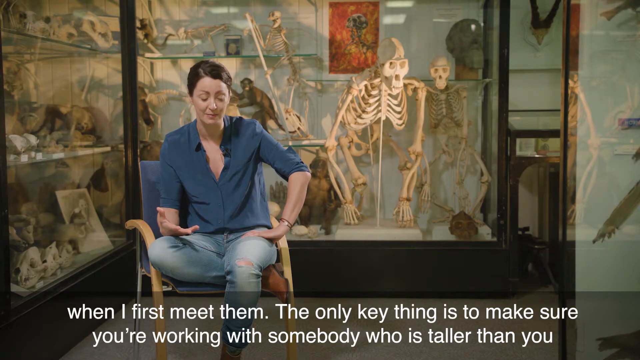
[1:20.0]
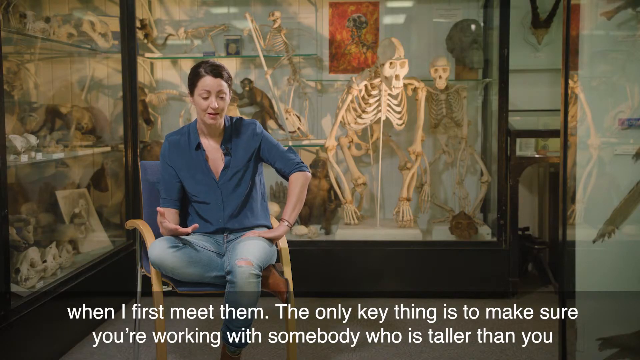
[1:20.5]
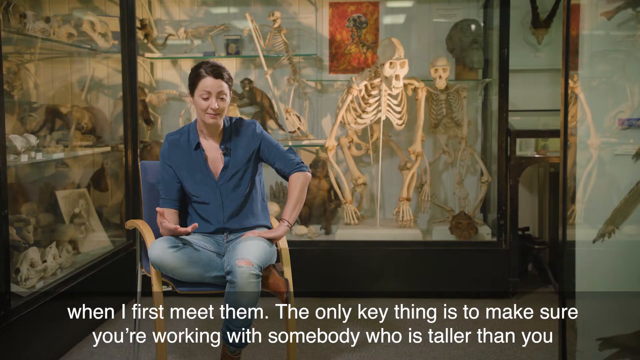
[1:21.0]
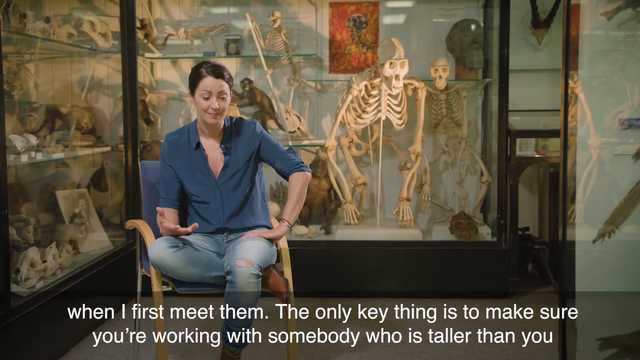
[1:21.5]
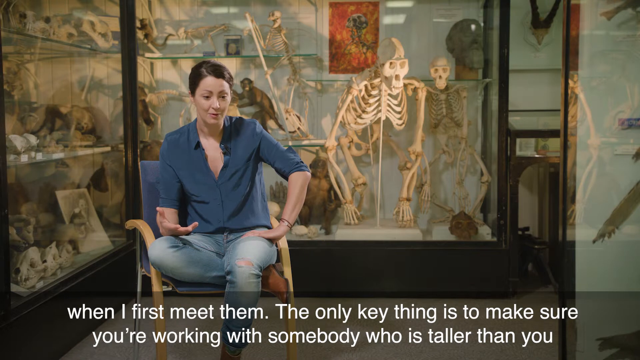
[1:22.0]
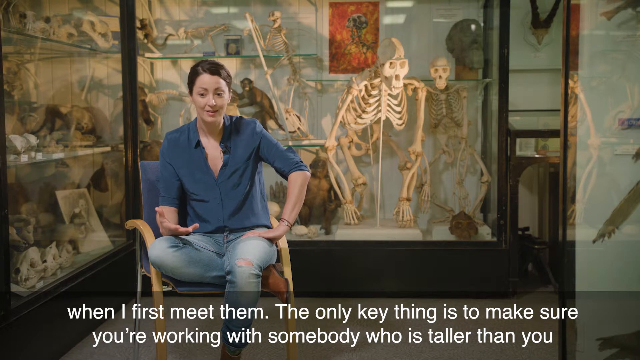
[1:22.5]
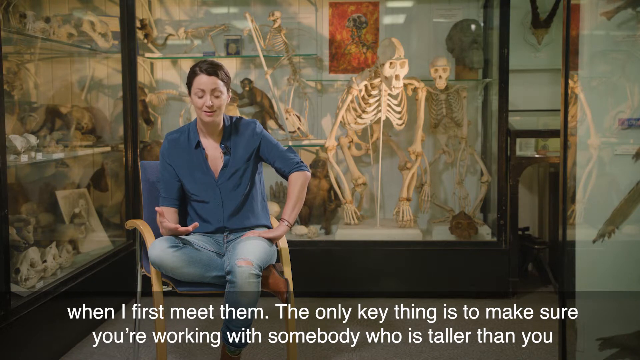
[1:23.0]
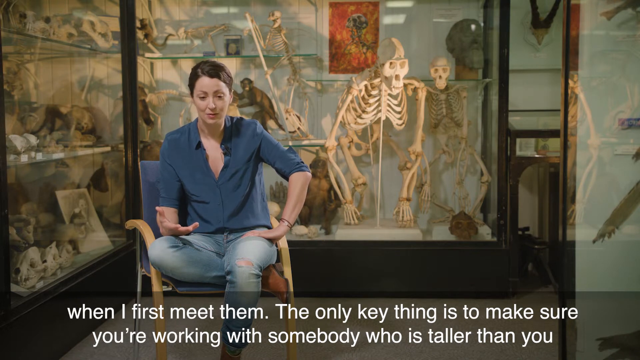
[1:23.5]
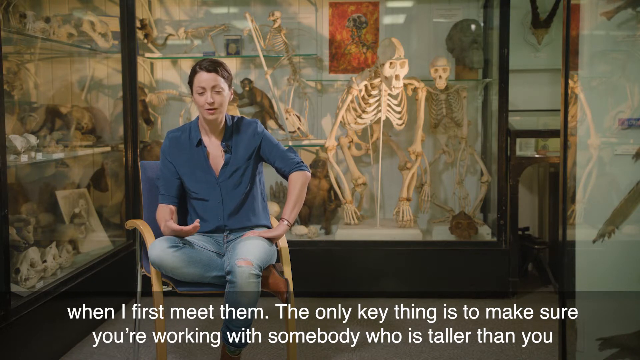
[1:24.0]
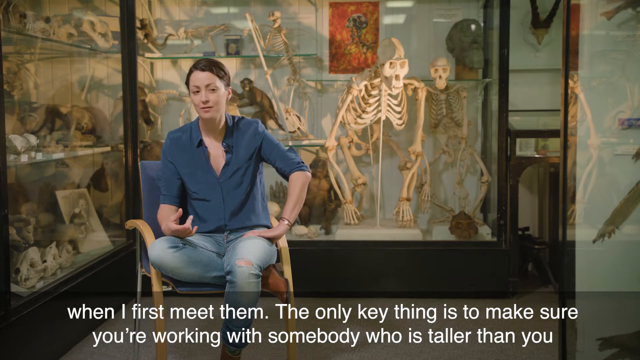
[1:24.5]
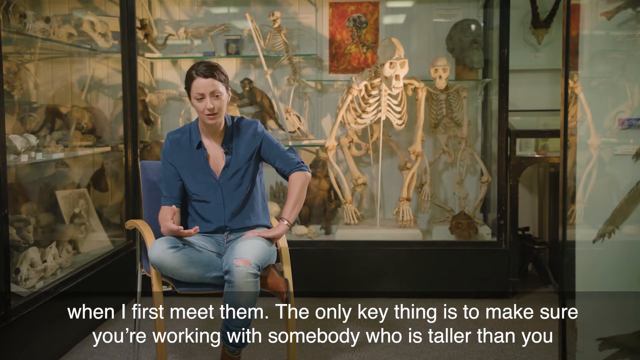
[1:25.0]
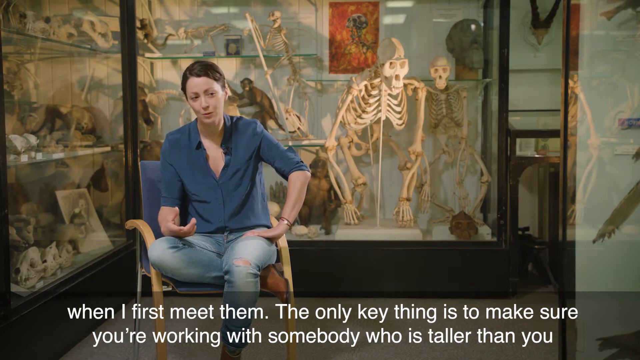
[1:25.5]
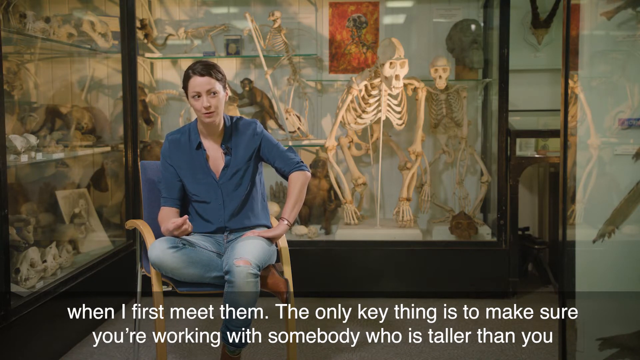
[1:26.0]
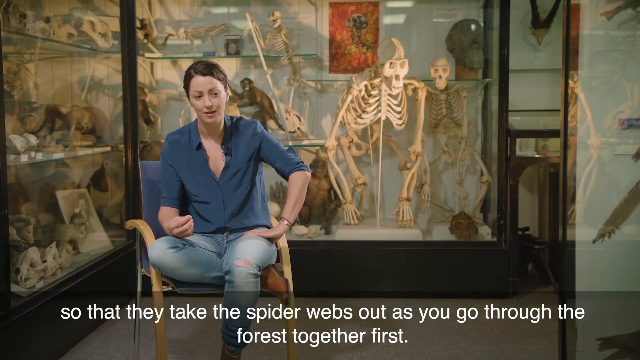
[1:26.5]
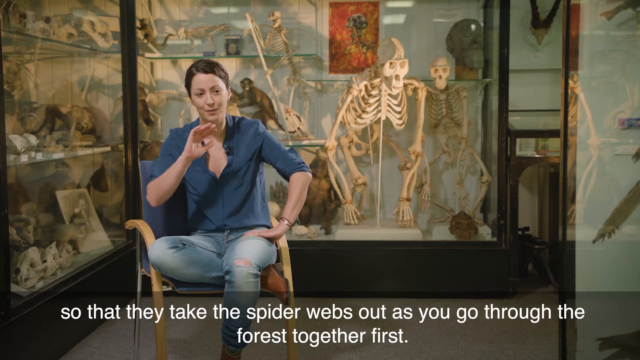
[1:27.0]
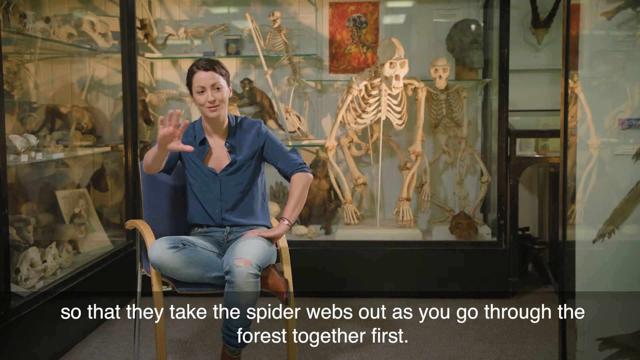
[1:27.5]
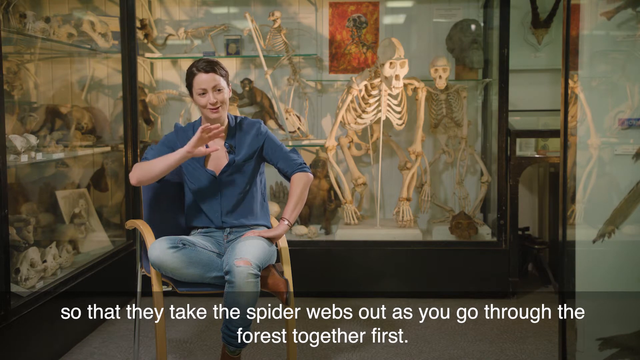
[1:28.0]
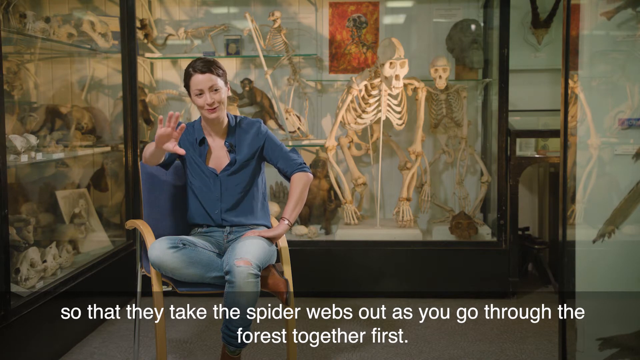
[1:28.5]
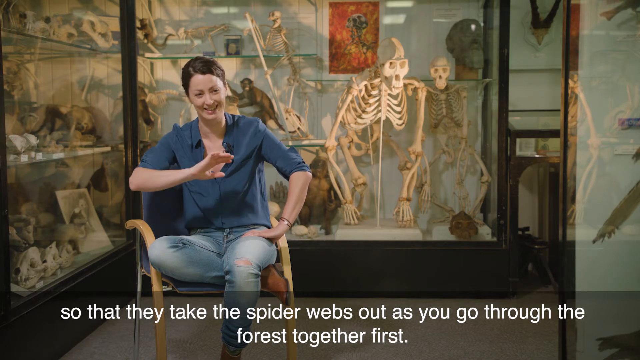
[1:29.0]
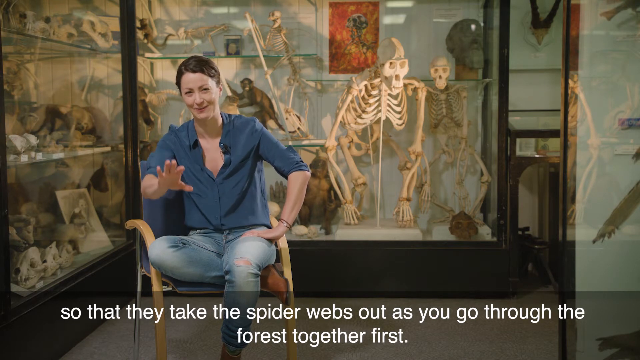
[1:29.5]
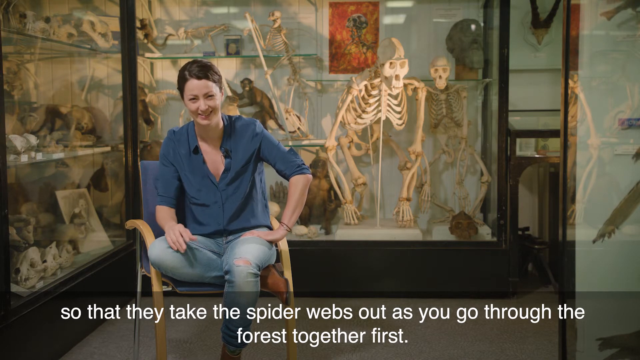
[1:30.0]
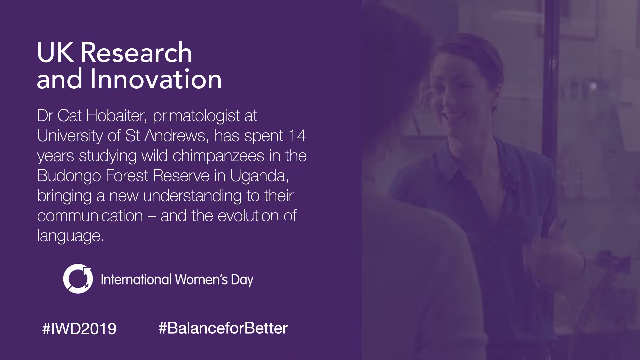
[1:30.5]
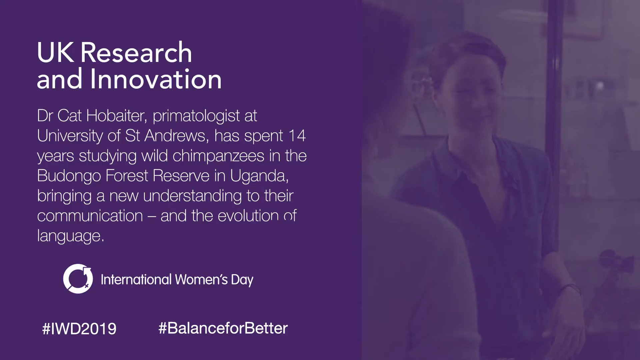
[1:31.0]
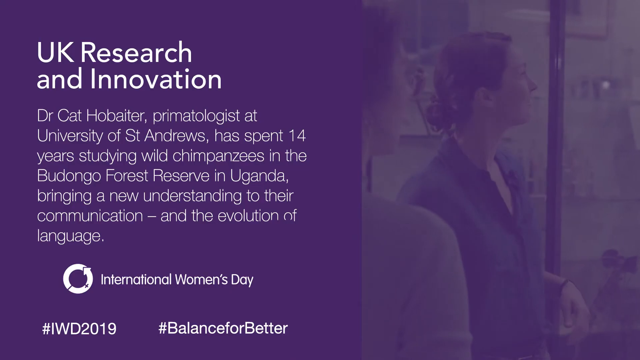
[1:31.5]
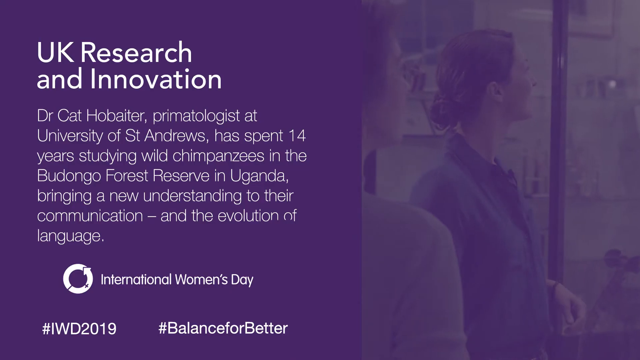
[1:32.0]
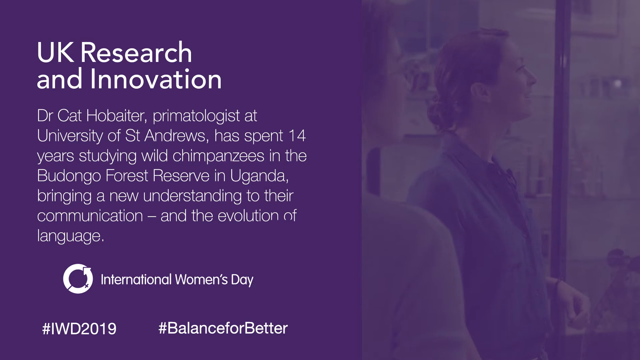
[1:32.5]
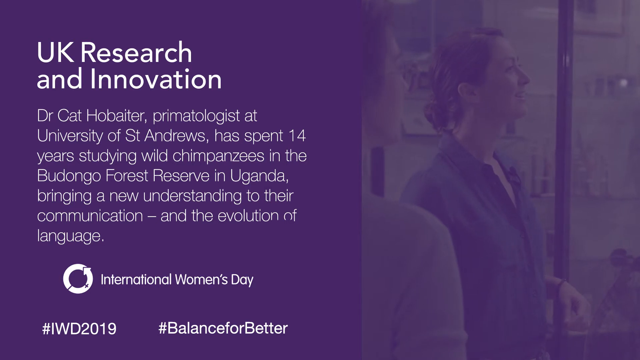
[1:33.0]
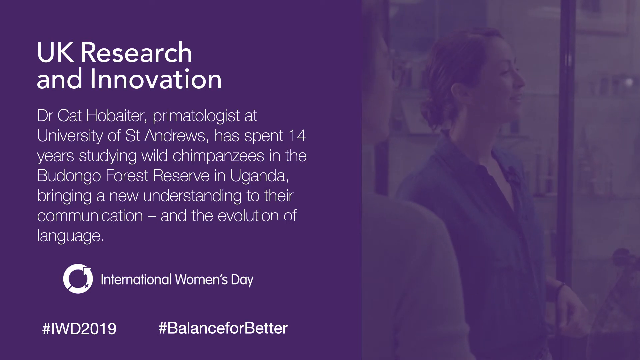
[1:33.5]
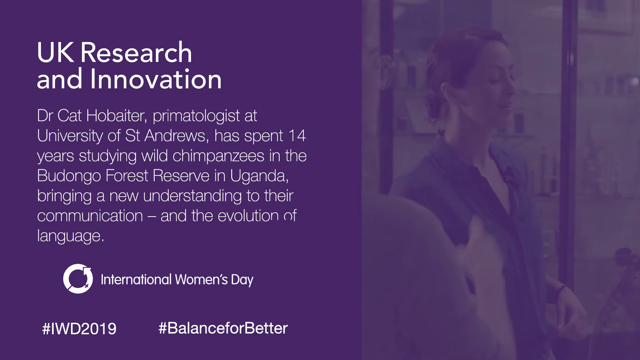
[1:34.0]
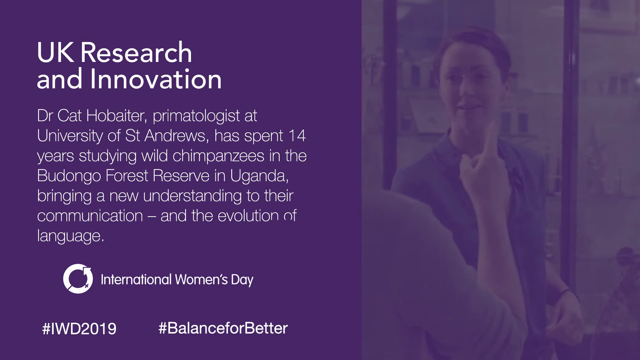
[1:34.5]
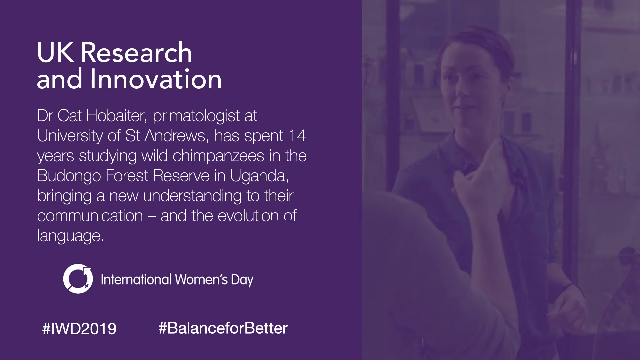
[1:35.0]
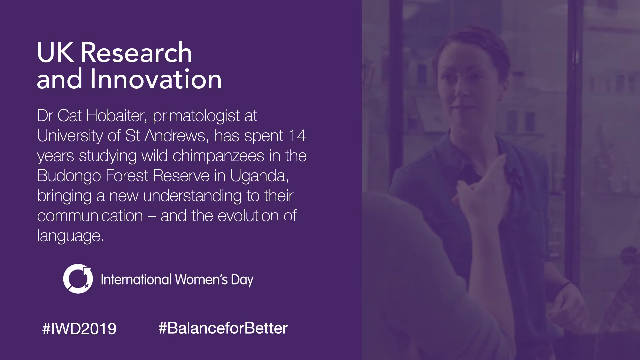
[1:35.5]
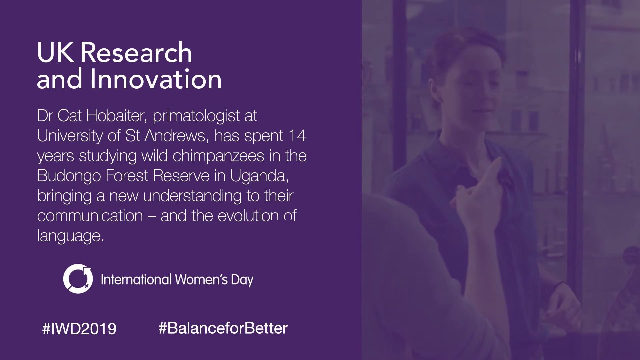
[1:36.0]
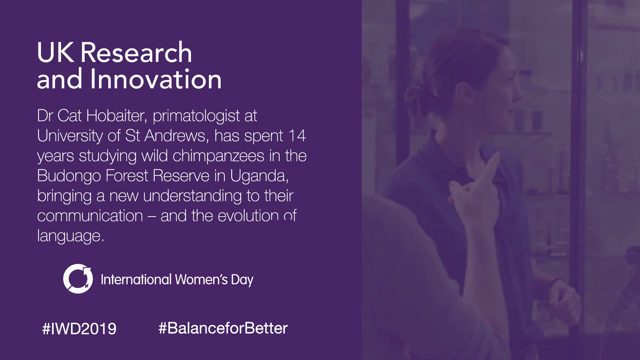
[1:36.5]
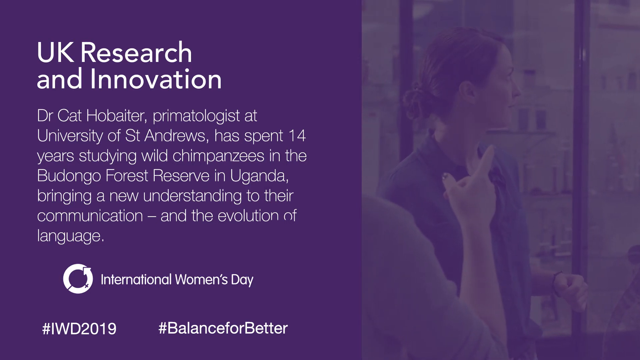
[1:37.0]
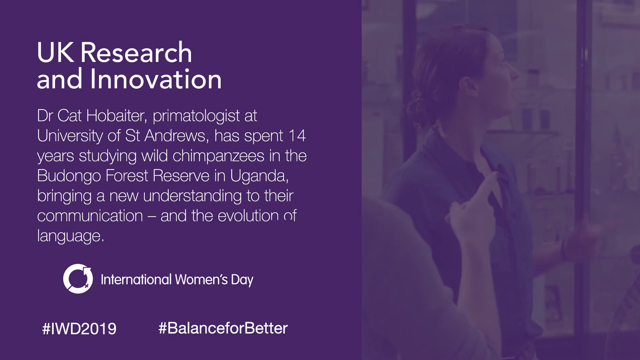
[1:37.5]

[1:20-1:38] A woman sits facing the viewer in a blue chair. She has short brown hair tied in a bun and wears a blue shirt with the sleeves rolled up to her elbows, a black bracelet on her left wrist, blue jeans and brown shoes. Her right ankle and leg are curled up under her left leg in the chair. Her left hand is placed on her left thigh and her right hand, palm up, on her right thigh. She looks down. In a partially transparent gray text box at the bottom, white text reads "when I first meet them. The only key thing is to make sure you're working with somebody who is taller than you." Behind her is a display case holding the bones and stuffed bodies of various monkeys and apes. She opens her mouth, still seeming overwhelmed. As her mouth opens wider, she looks to the left side of the frame and looks off as if thinking. She speaks in a measured way, curling the fingers of her right hand before spreading them out again. As she looks down and to the right, her gaze rises and the text changes to "so that they take the spiderwebs out as you go through the forest together first." She raises her right hand in front of her, showing her palm, moves it to her right, brings it back and moves it forward as if pushing out, then moves it back, lowers it a bit and pushes out again. She seems to laugh as her gaze meets the camera, smiling and giggling. Her gaze falls as her right hand rests on top of her right knee. The video shifts to an image of the woman, shaded purple, on the right: a picture of the woman in the blue shirt facing the woman in the gray dress and smiling at her. On the left side, white text at the top reads "UK Research and Innovation". Beneath it, smaller white text reads "Dr. Kat Hobaiter, primatologist at University of St. Andrews, has spent 14 years studying wild chimpanzees in the Budongo Forest Reserve in Uganda, bringing a new understanding to their communication - and the evolution of language." Below that is a symbol of a circle with an arrow on it, and to its right white text reads "International Women's Day". Beneath that, to the lower right, white text reads "#IWD2019", and to its right "#BalanceforBetter". In the background image, the woman in the blue shirt turns to her left and looks up, as does the woman in gray, before turning slightly back toward her right, smiling. The woman in gray raises her right hand and points in front of her; the woman in the blue shirt looks at her and smiles, then turns her head to follow her finger and raises her own left hand to point.